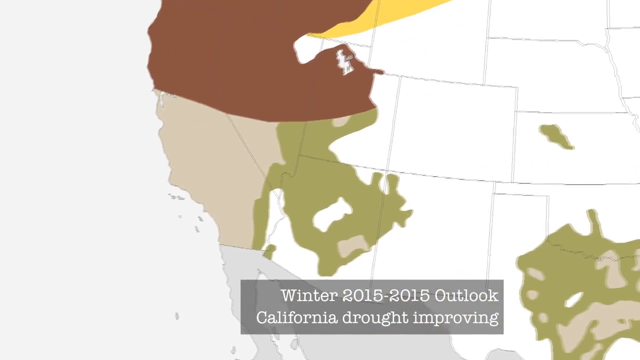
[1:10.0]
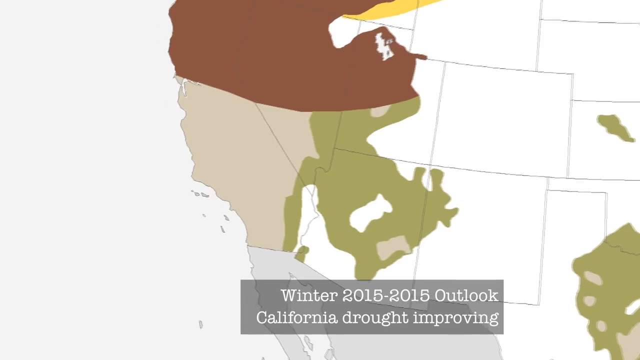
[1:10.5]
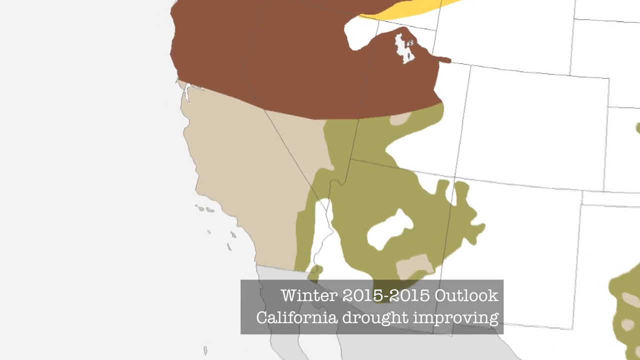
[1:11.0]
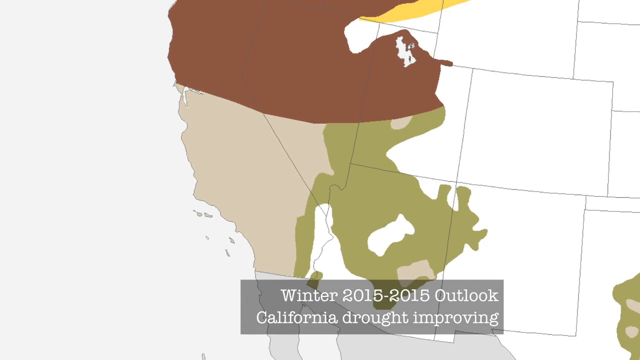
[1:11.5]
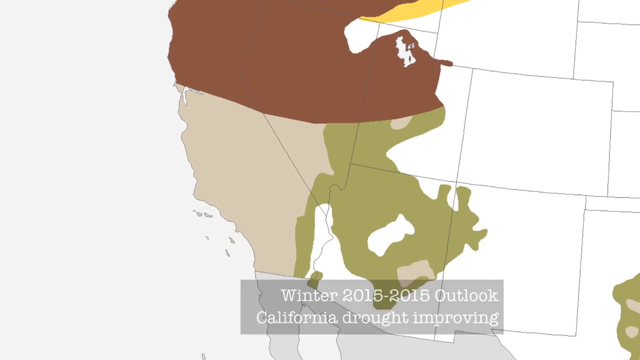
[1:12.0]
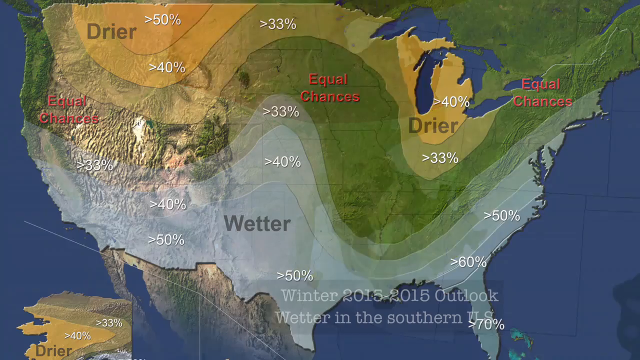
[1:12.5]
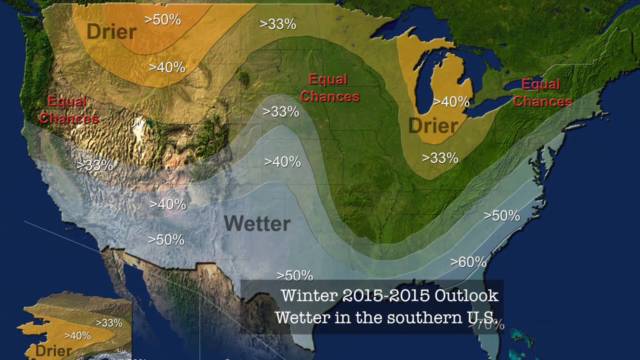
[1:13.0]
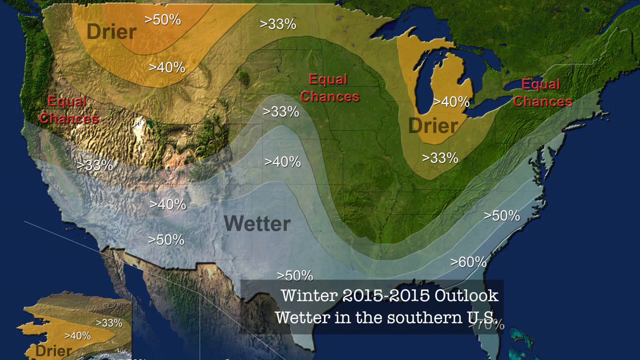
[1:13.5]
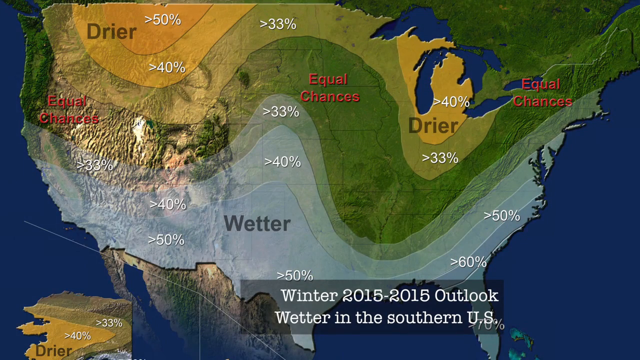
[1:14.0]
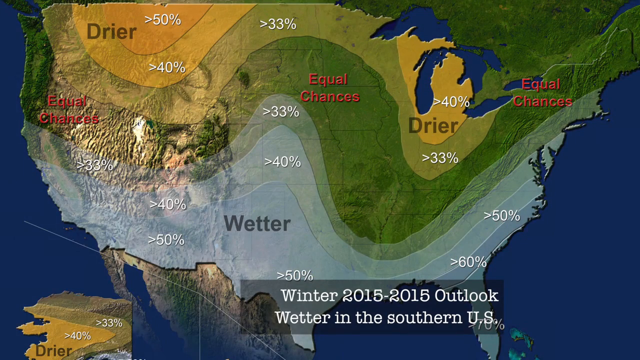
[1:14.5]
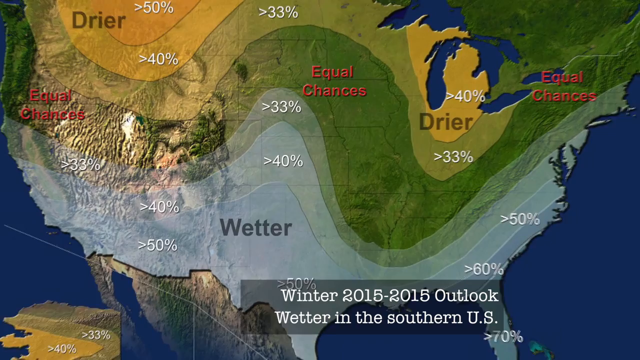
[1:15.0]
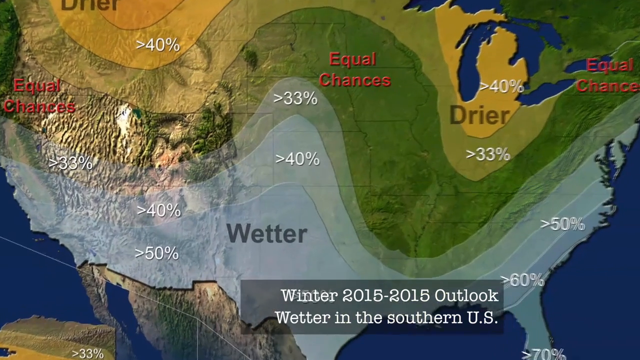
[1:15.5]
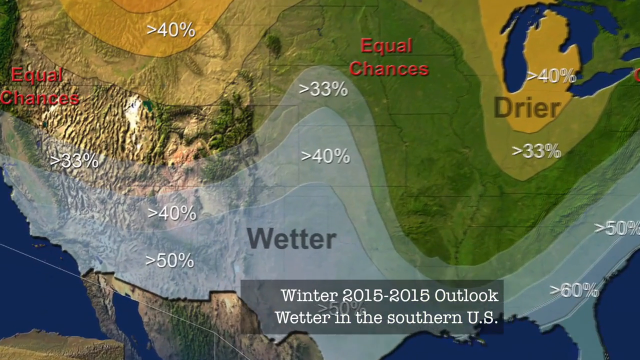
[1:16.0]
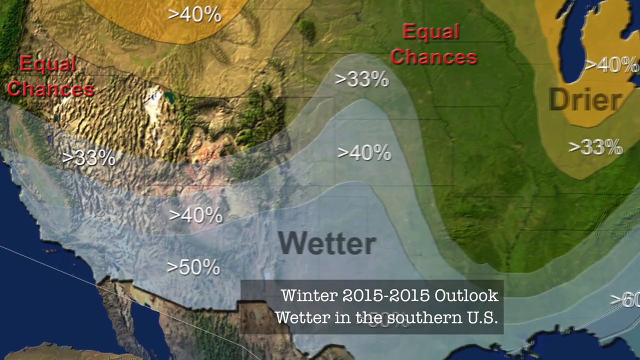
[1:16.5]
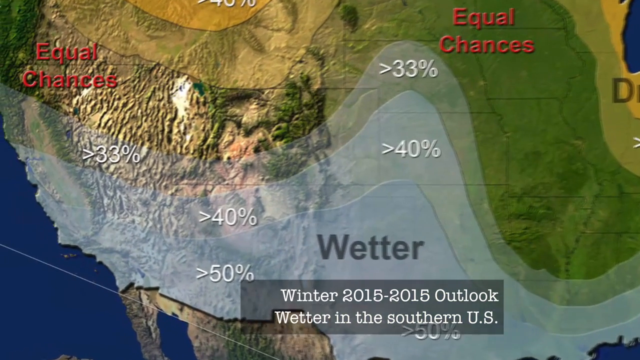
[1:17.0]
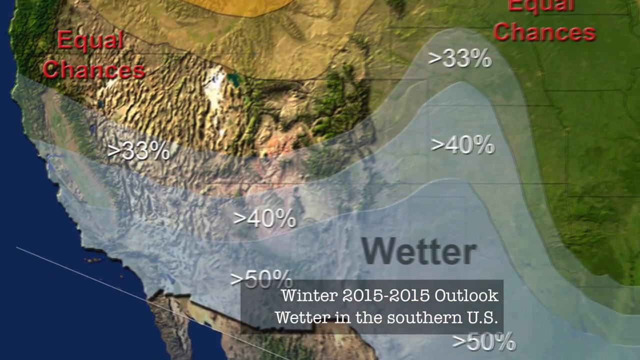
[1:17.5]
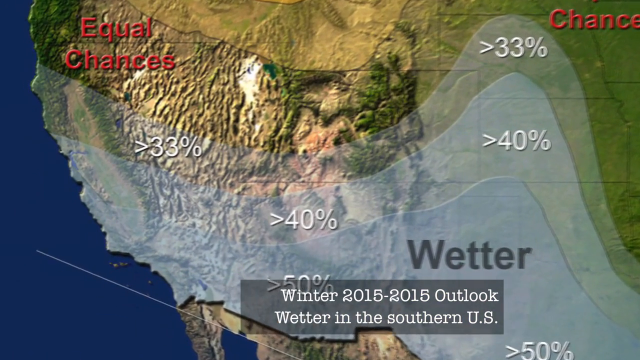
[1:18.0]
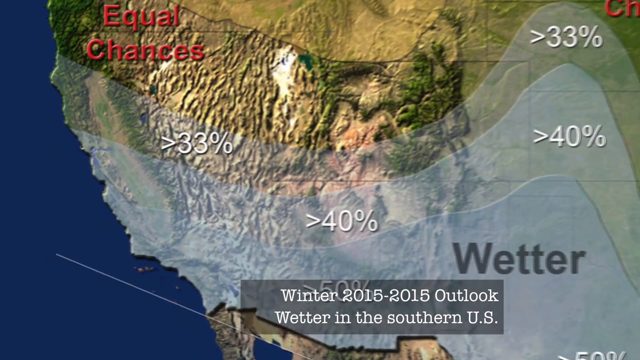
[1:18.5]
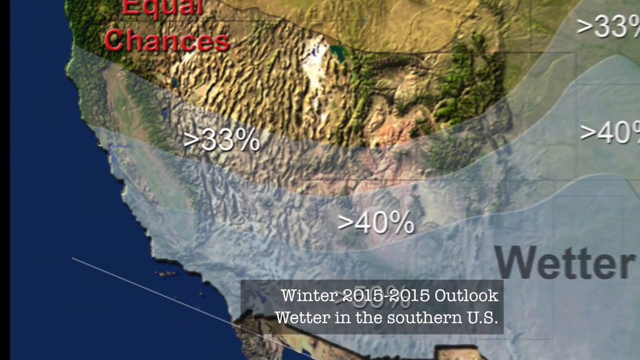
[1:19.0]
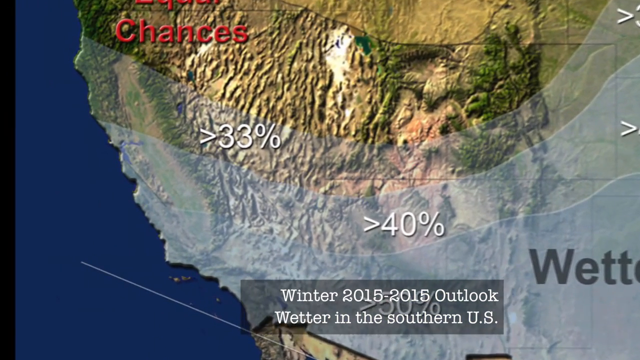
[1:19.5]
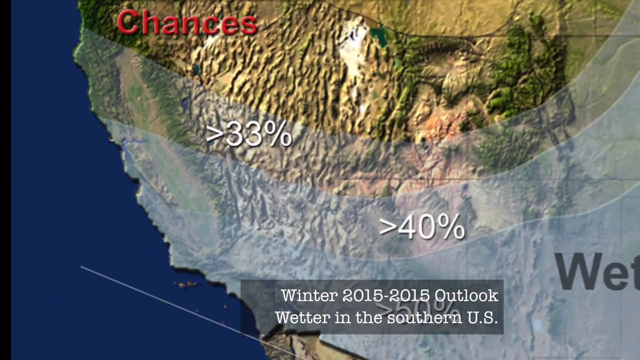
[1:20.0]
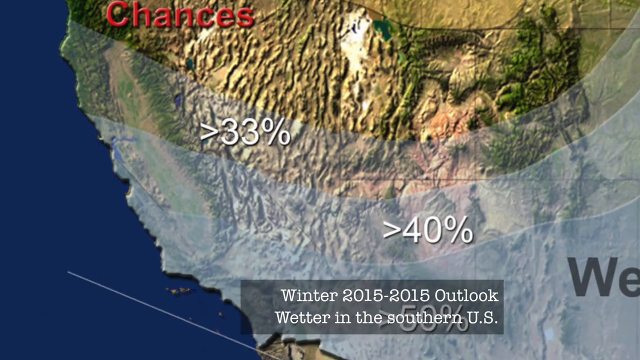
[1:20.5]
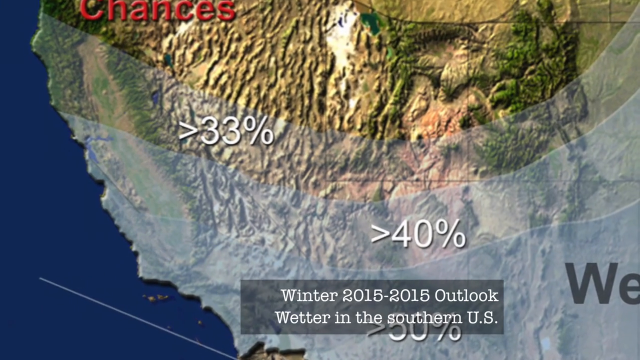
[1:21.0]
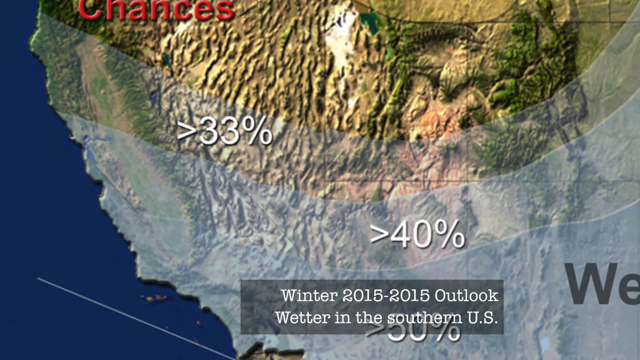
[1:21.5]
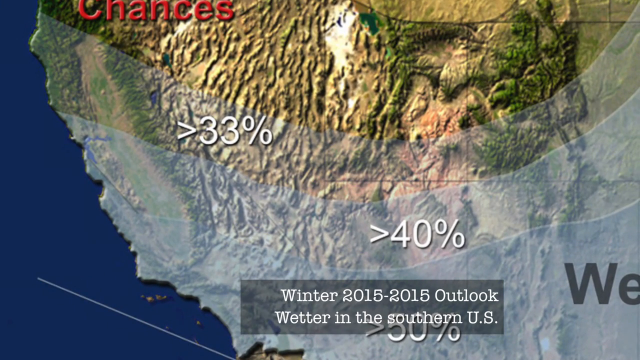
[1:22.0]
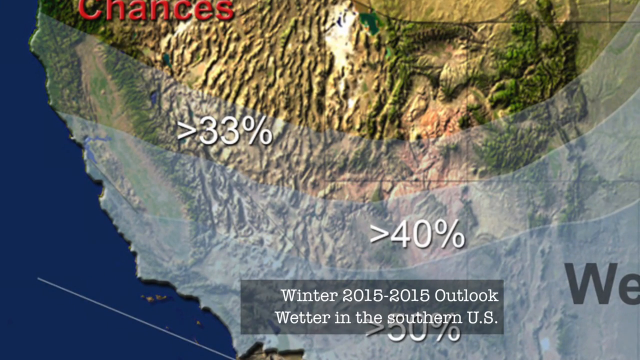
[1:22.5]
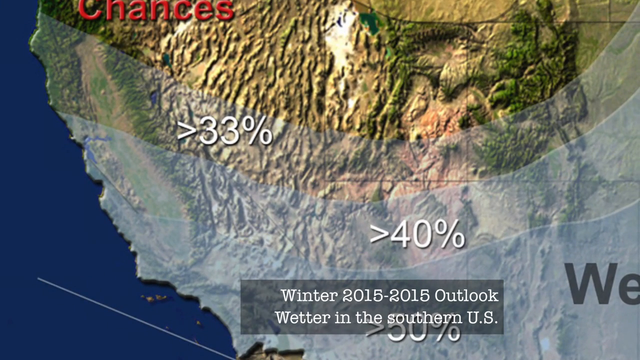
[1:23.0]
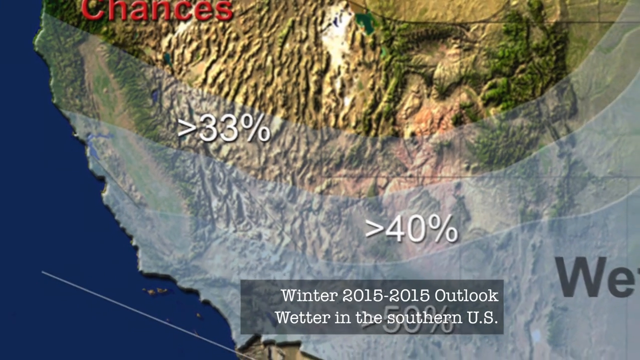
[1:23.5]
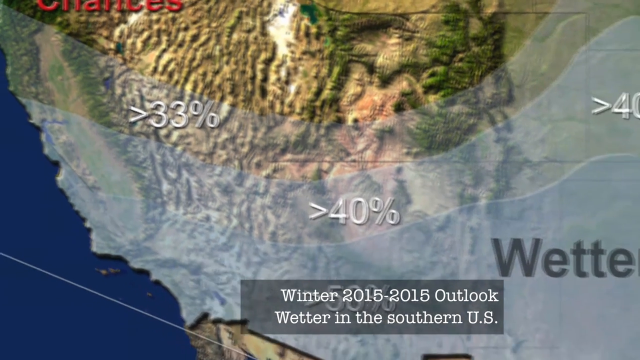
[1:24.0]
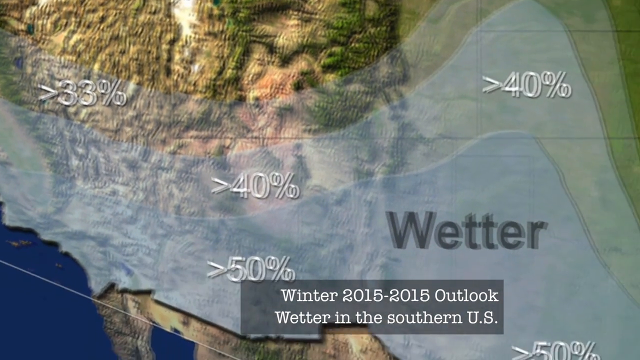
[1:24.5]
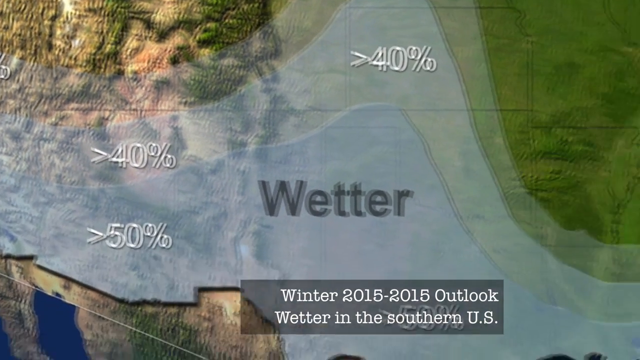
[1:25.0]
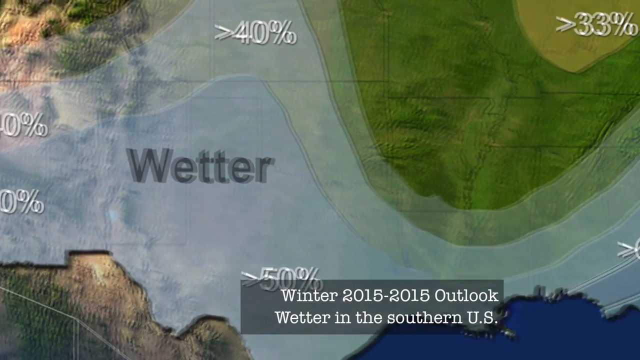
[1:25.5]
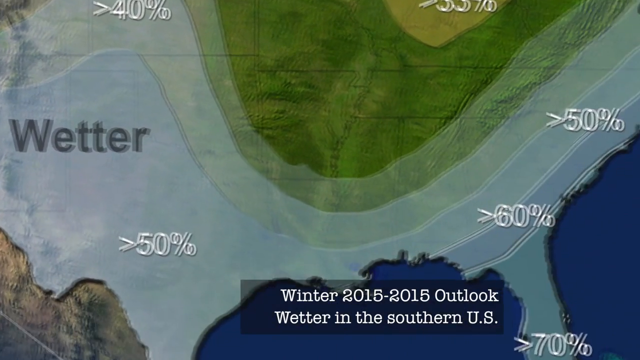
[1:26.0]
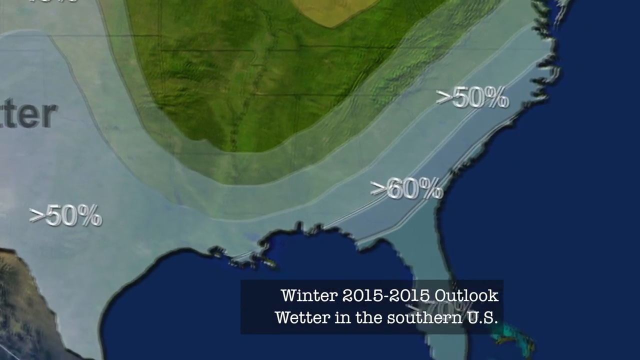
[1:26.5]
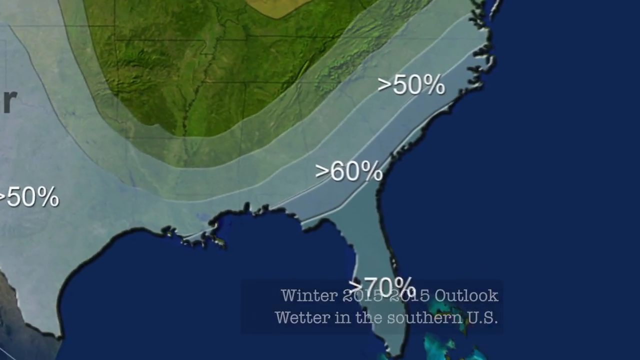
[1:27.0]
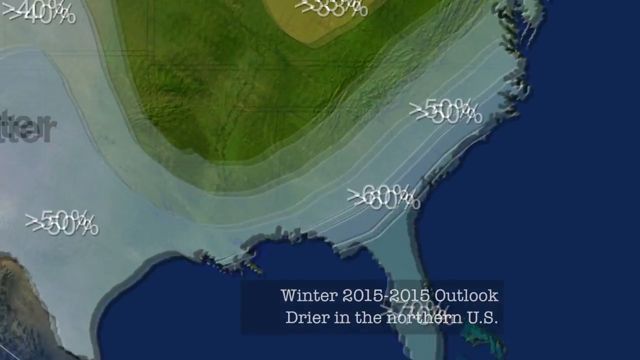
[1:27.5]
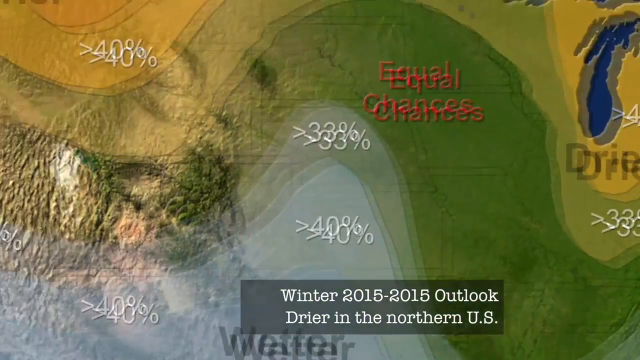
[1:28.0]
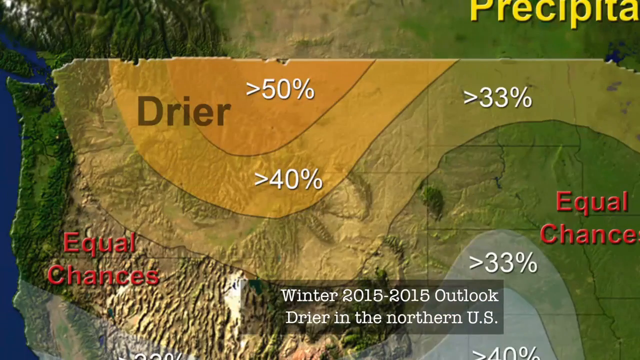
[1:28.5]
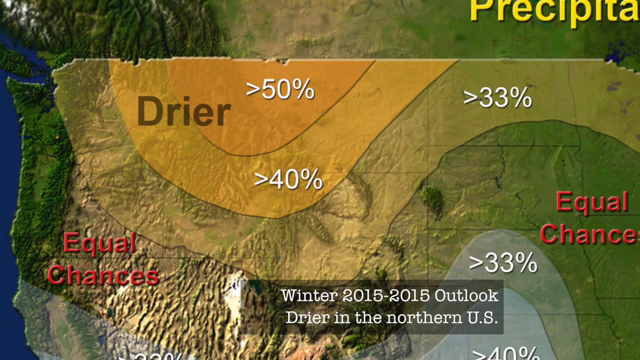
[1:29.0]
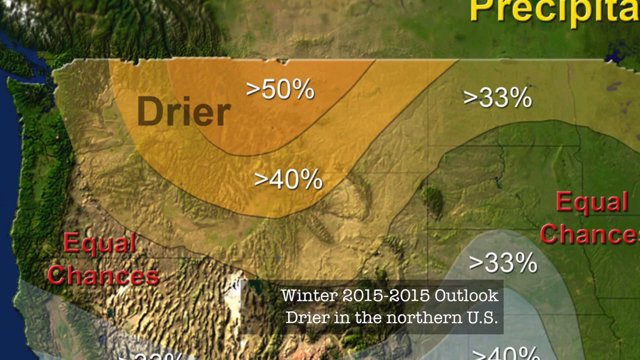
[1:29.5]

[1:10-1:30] The map is zoomed in on California, which is a very light pinkish color, while the states next to it have brown shades. The bottom reads "winter 2015-2015 outlook California drought improving." The view then zooms out to another map, with the word "drier" at the top of the U.S. and percentages all around the map showing 50%, 40%, and 33%. In the middle of the United States, "equal chances" appears in red font, and the bottom half of the country says "wetter" with a light blue shade behind it. The bottom of the screen reads "winter 2015-2015 outlook wetter in the southern U.S." The view zooms in on the southern part of the United States showing 33, pans across to Florida showing 60% and 70%, and then goes back up quickly to the top of the map.